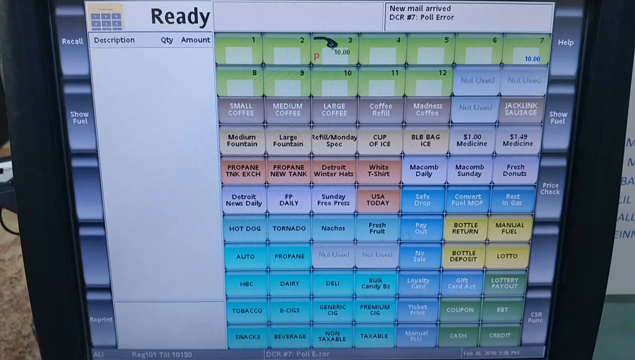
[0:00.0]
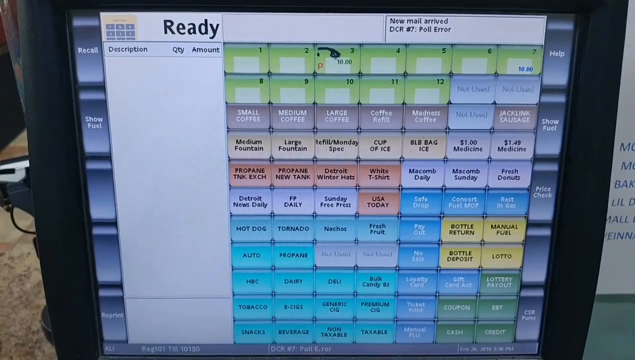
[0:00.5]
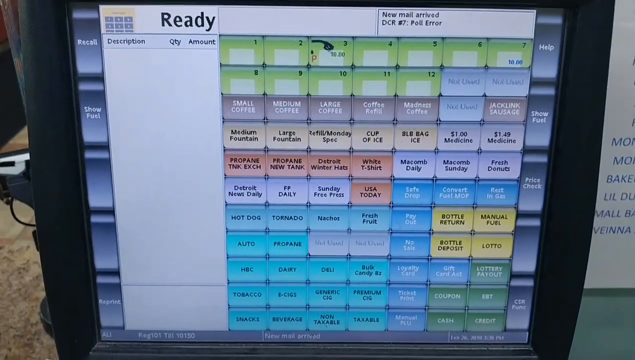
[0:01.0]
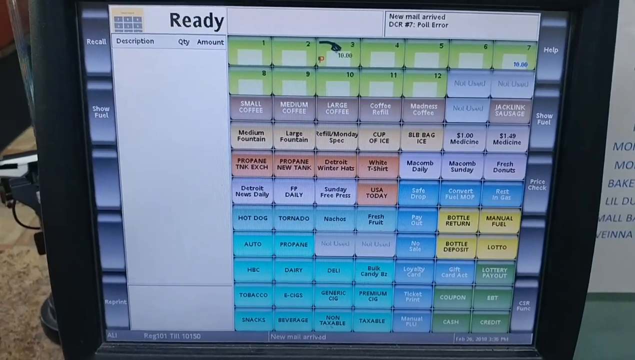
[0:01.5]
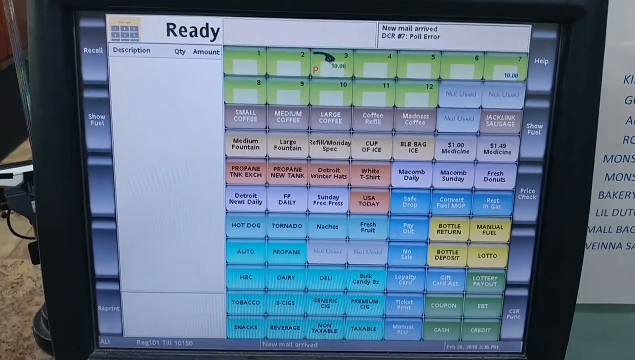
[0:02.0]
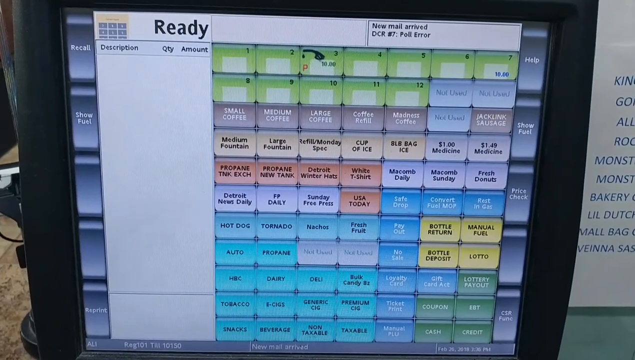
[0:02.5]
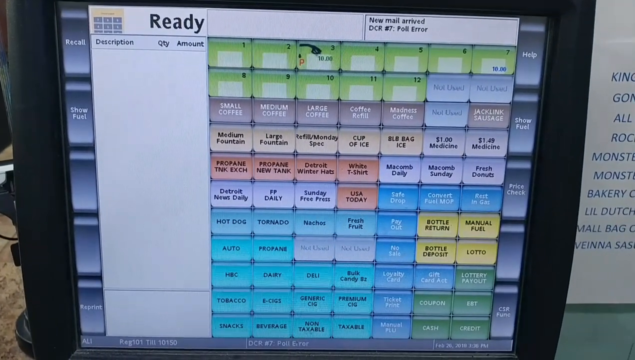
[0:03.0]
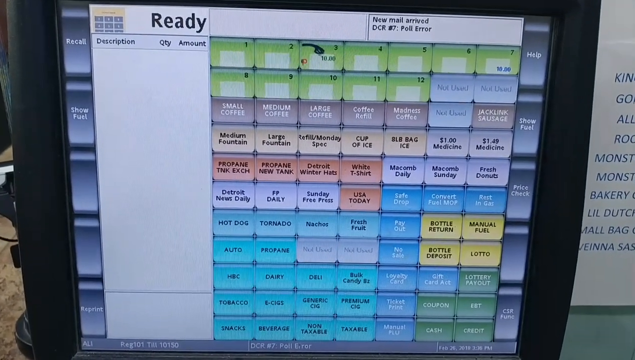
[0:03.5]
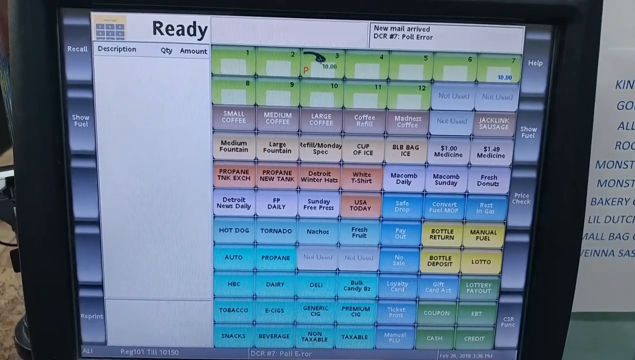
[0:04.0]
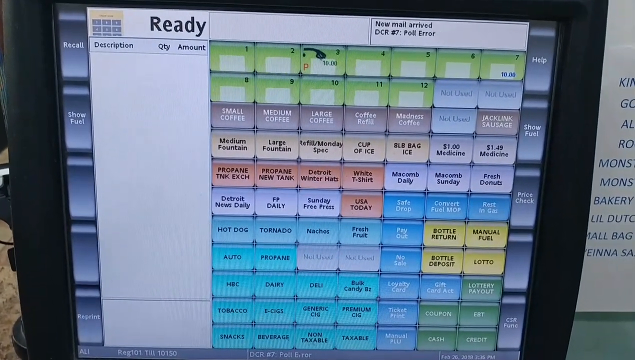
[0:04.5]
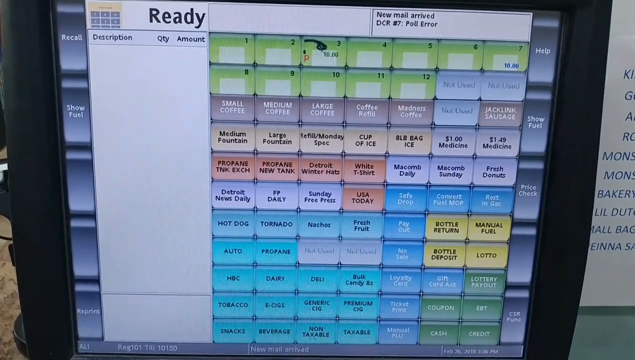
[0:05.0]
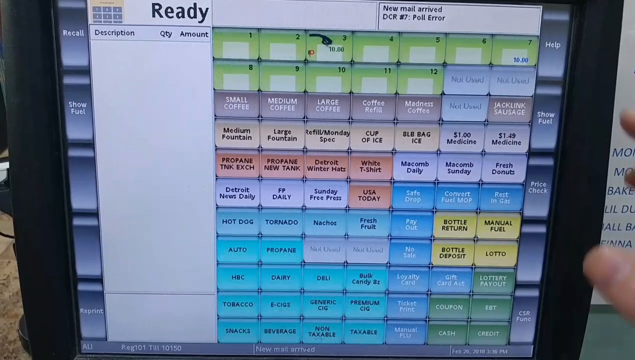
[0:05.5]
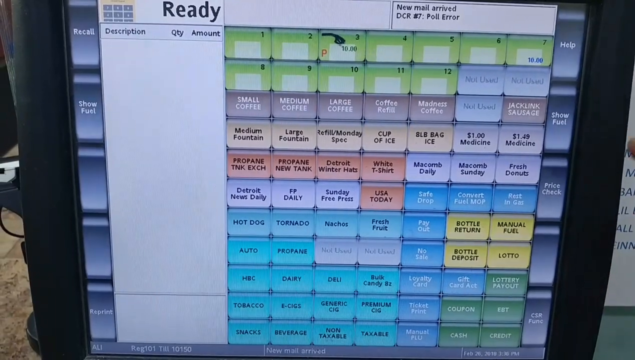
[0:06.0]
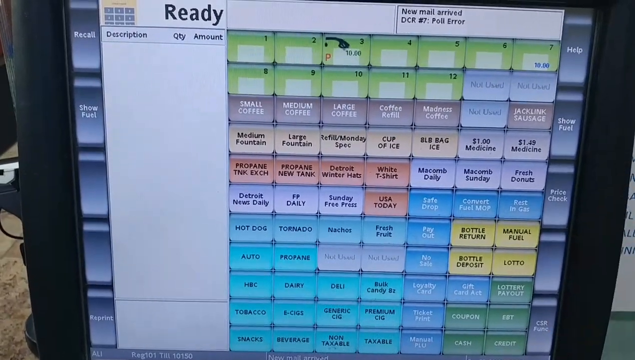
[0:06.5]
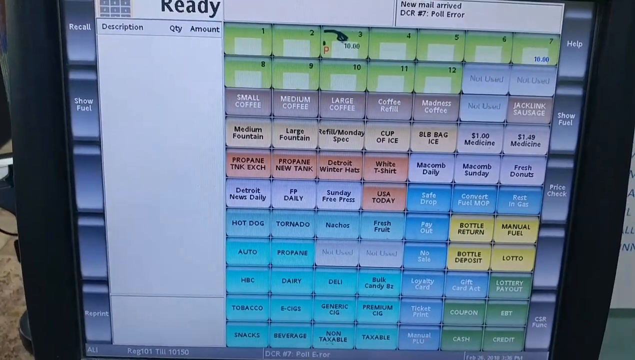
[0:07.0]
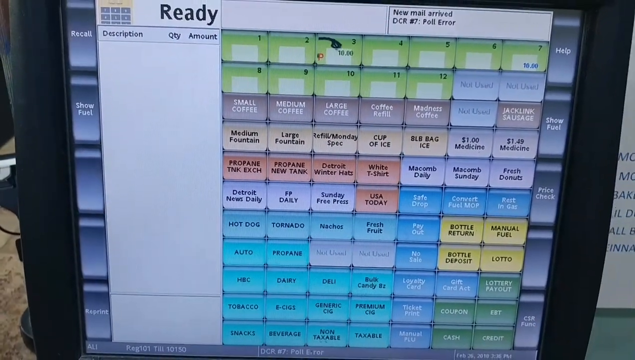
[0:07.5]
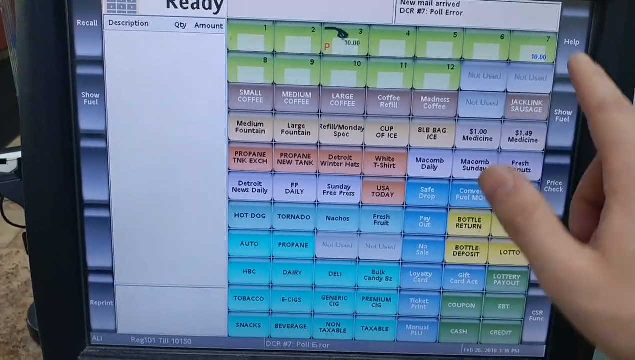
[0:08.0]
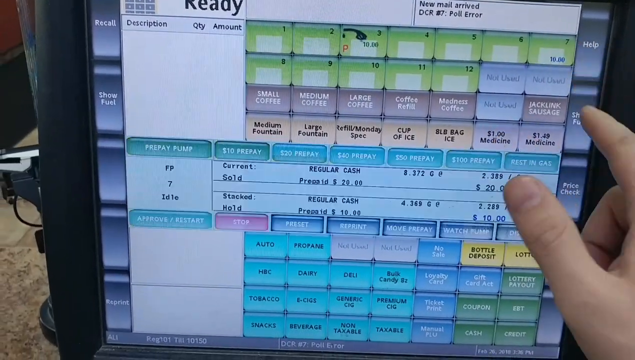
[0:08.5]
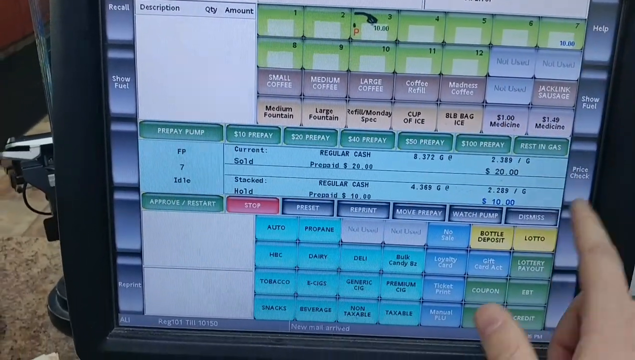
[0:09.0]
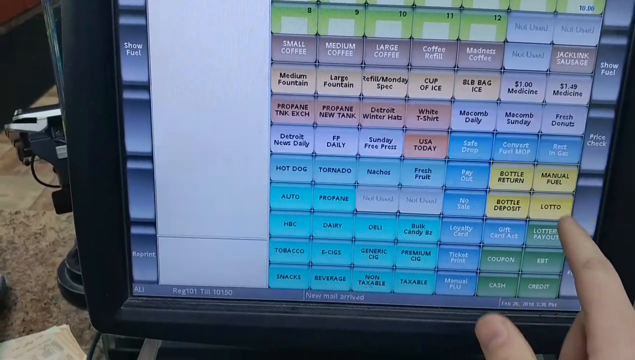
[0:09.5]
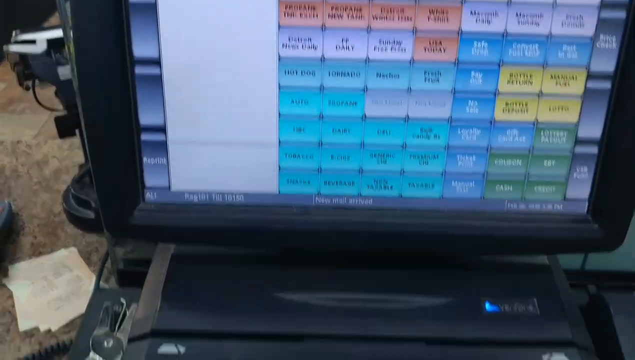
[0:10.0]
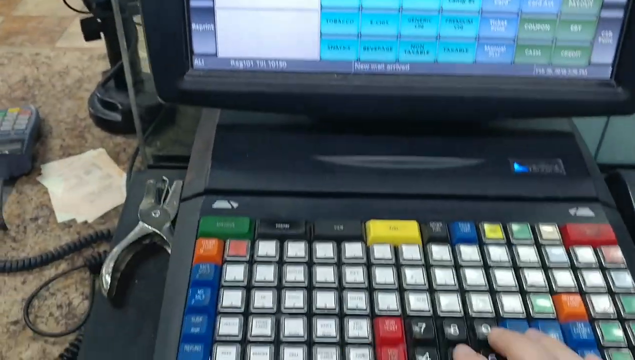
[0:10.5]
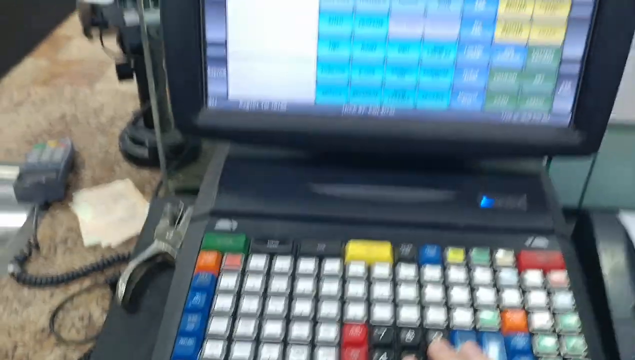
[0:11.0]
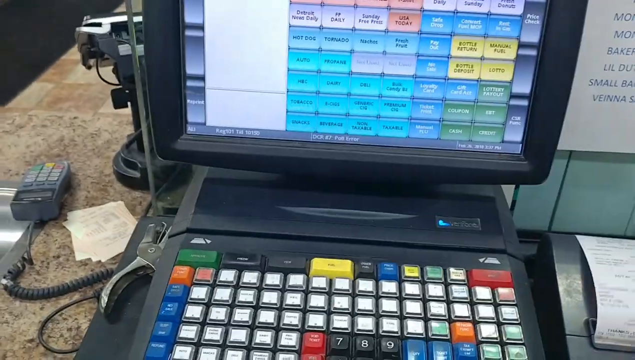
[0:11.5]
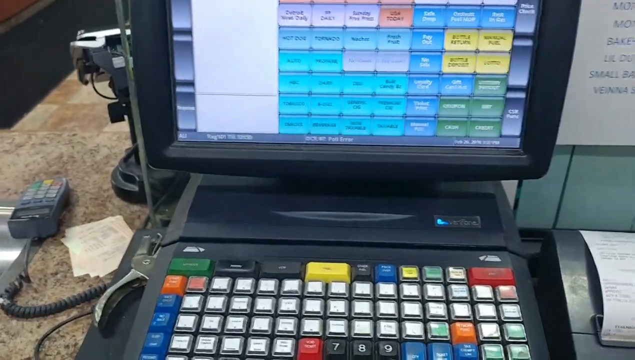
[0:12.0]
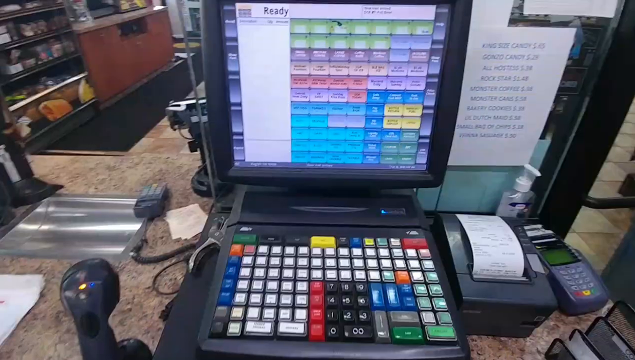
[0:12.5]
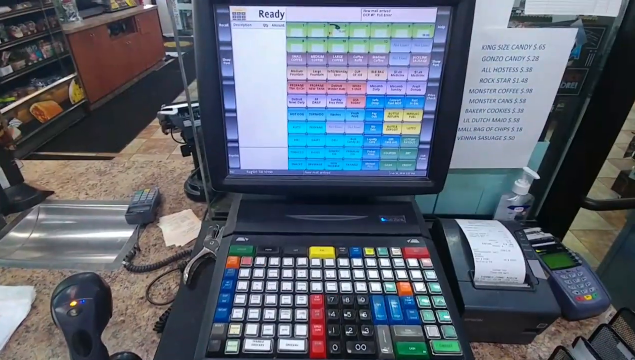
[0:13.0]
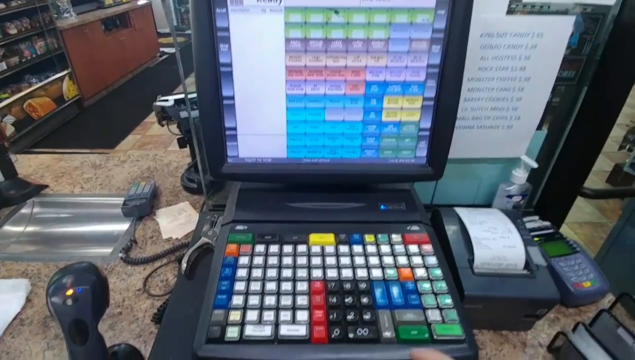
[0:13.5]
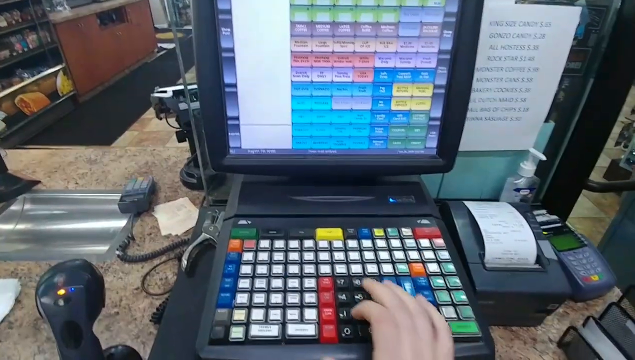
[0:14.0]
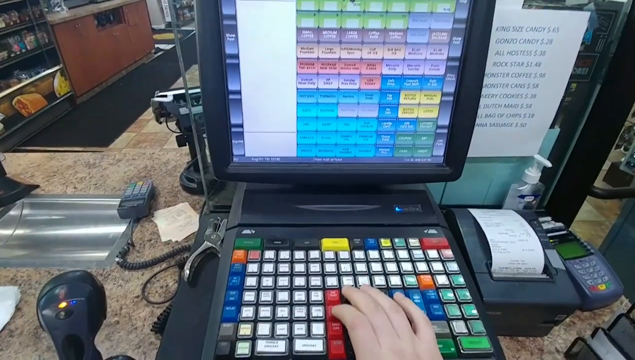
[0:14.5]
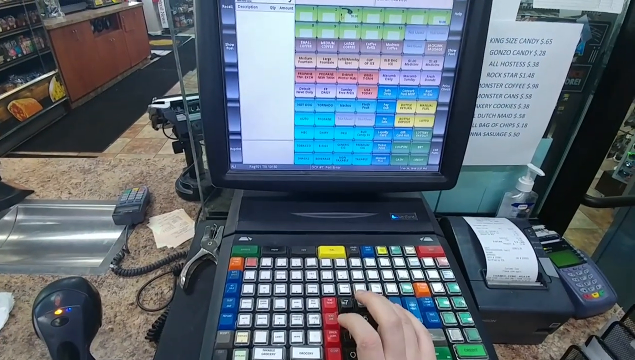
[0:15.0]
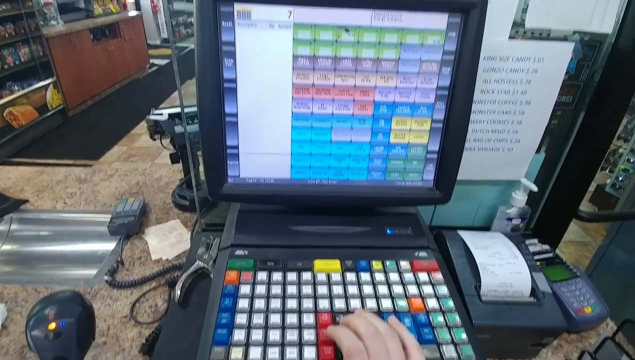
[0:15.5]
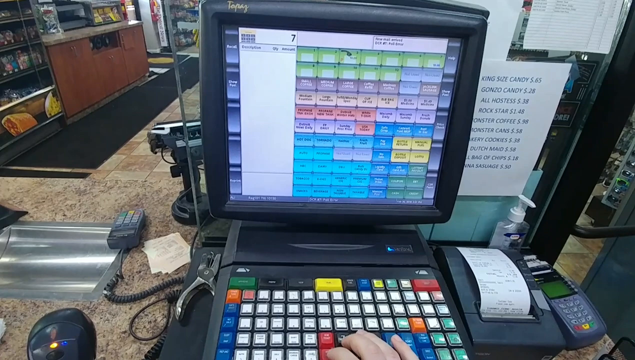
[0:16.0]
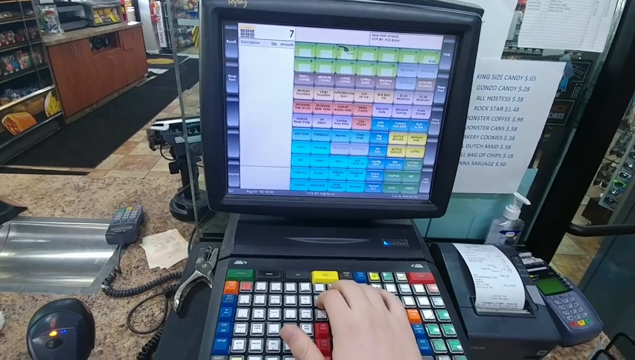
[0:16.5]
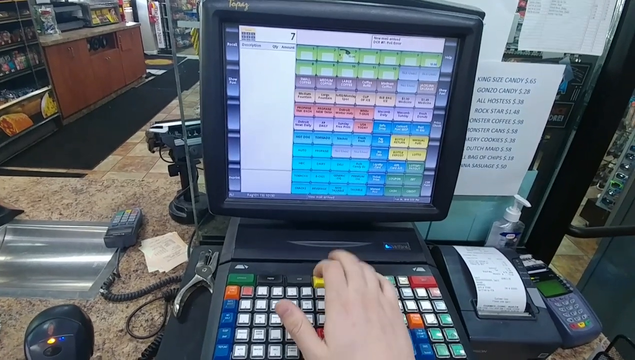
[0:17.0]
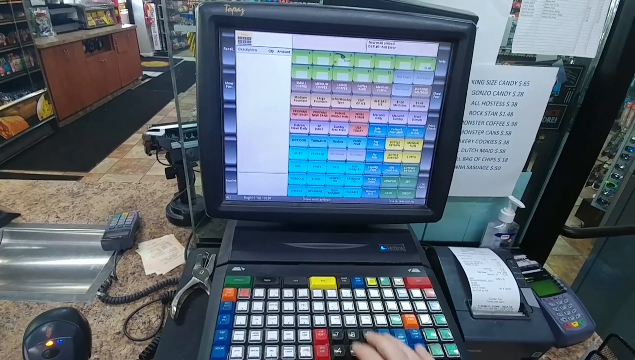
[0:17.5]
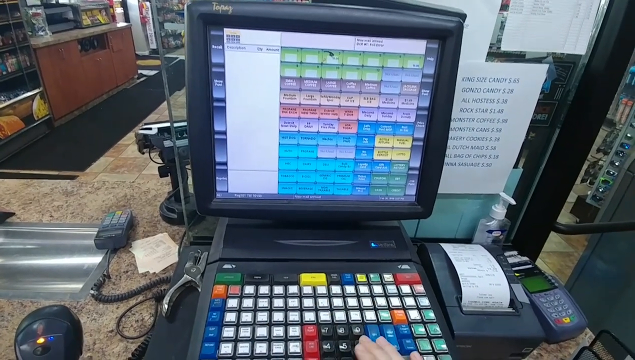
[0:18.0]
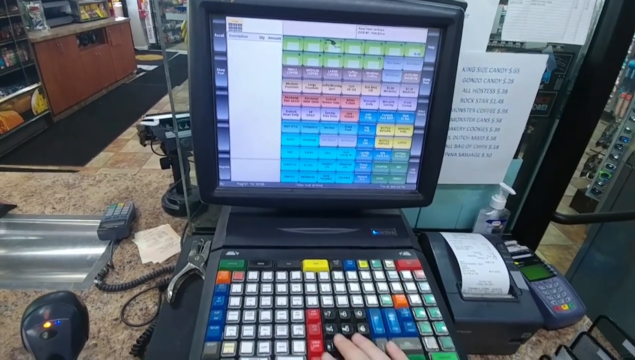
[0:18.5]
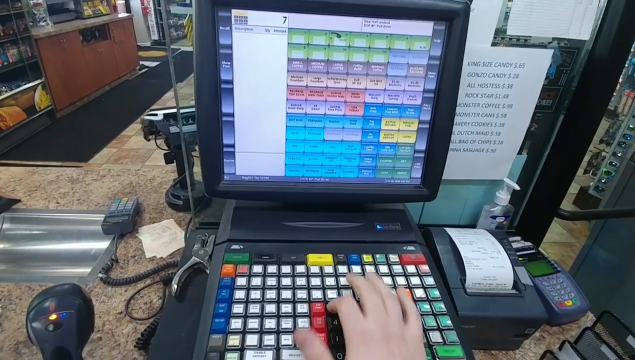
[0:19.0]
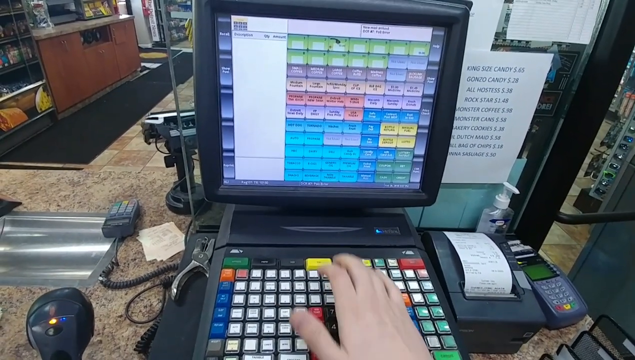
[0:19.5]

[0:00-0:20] A checkout screen, apparently for a store, shows rows of options. The top row, in gray, lists "small coffee", "medium coffee", "large coffee", "coffee refill", "madness coffee" and "Jack Link sausage". The second row, which appears to be some sort of light brown, lists "medium fountain", "large fountain", "refill / one-day spec", "cup of ice", "eight-pound bag of ice", "$1 medicine" and "$1.49 medicine". Below that, a third row lists "propane tank each", "propane new tank", "Detroit winter hats", "white t-shirt", "Macomb daily", "Macomb Sunday" and "fresh donuts"; the first four are pinkish and the next three are some sort of purple color. On the left is a receipt-type menu with description, quantity and amount columns, currently empty. In the top right the screen says "new mail arrived, DCR number seven, poll error". Later the view zooms out to show a cash register, where somebody is pressing buttons on some sort of keyboard-type device.